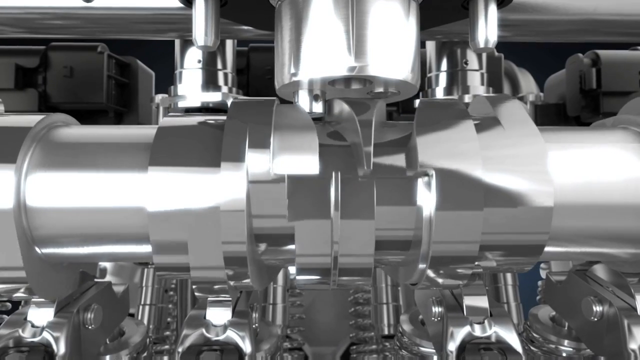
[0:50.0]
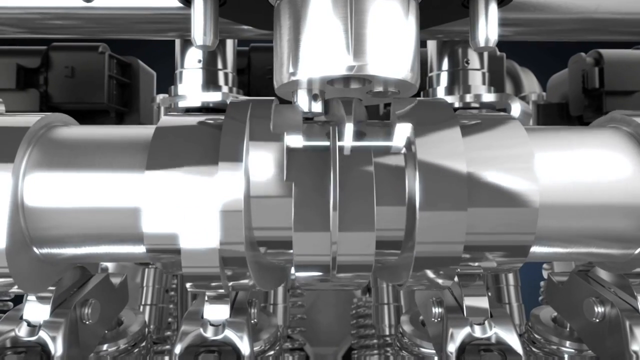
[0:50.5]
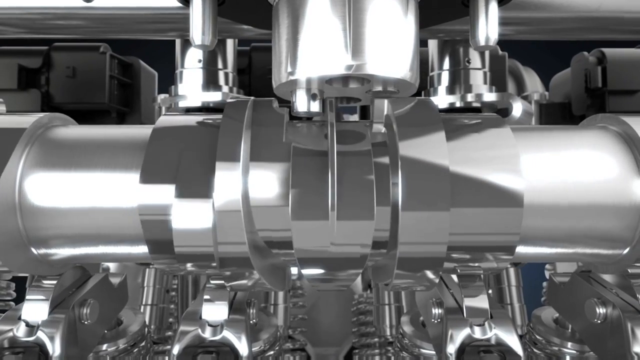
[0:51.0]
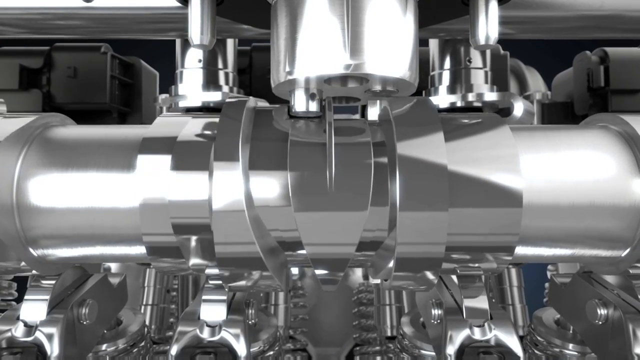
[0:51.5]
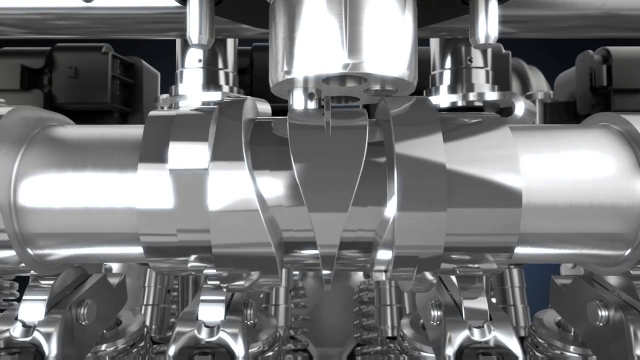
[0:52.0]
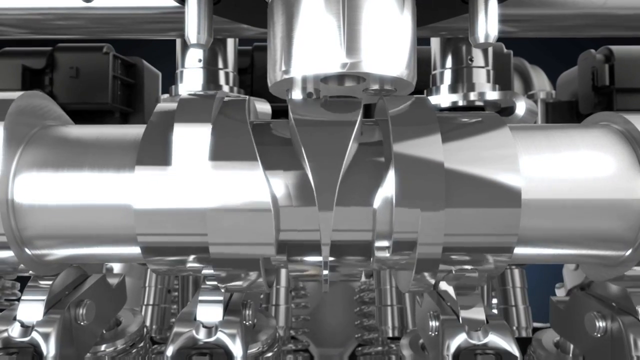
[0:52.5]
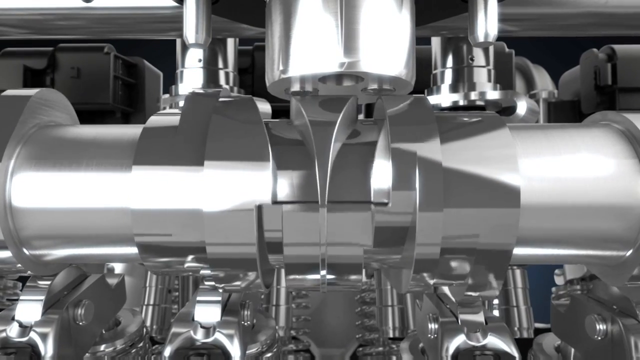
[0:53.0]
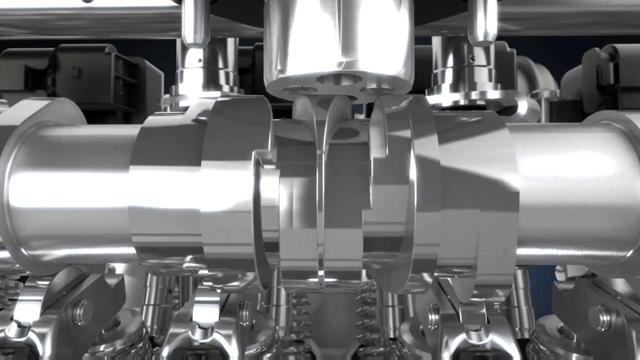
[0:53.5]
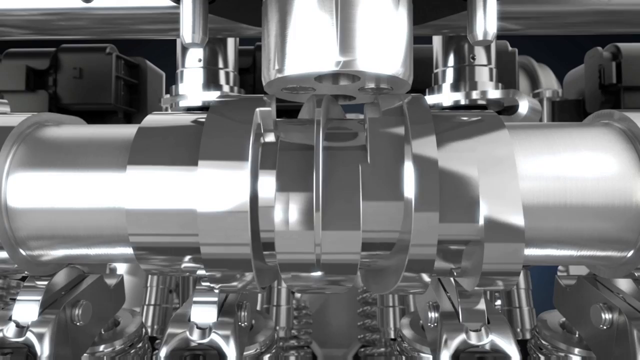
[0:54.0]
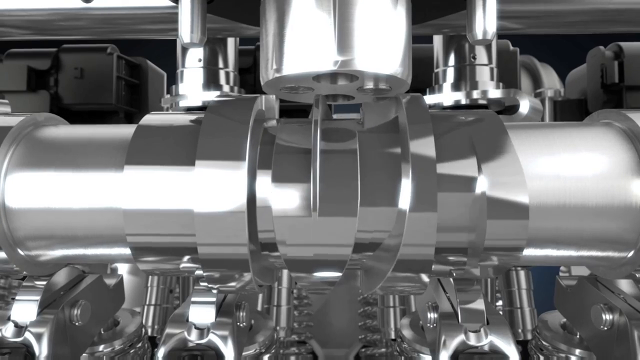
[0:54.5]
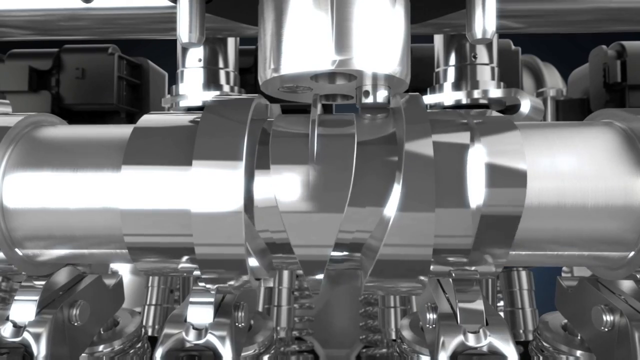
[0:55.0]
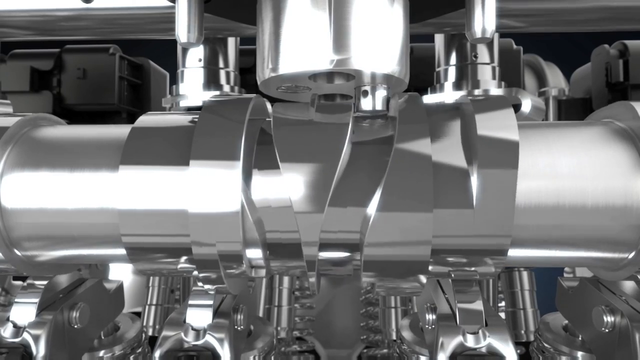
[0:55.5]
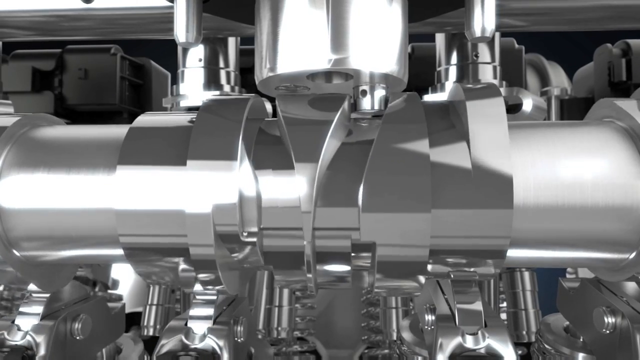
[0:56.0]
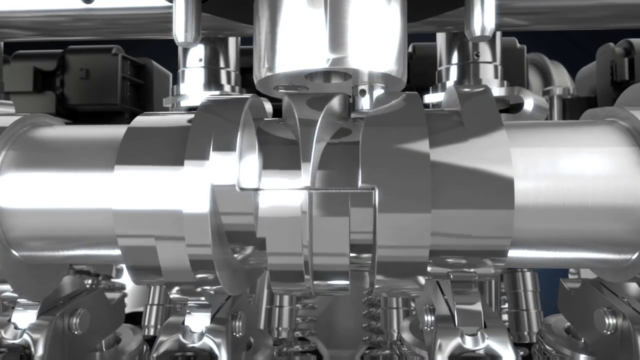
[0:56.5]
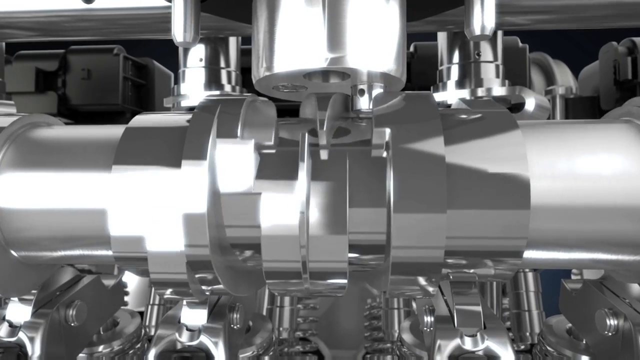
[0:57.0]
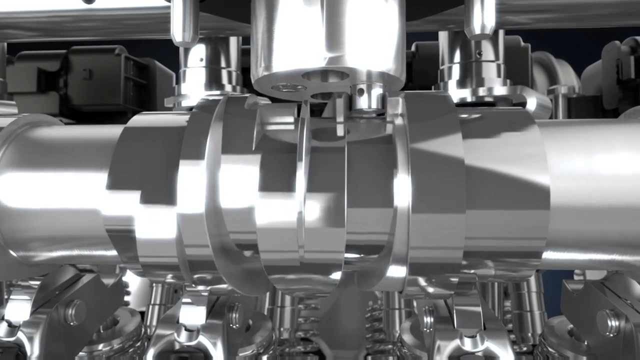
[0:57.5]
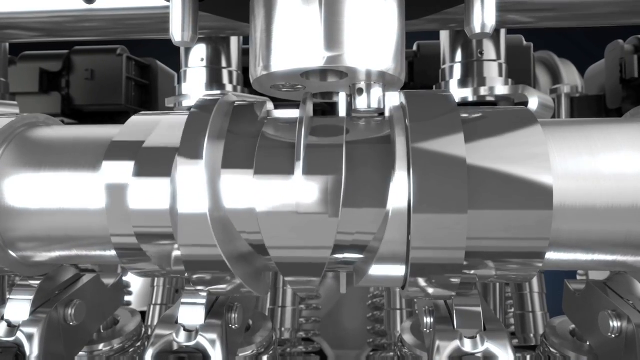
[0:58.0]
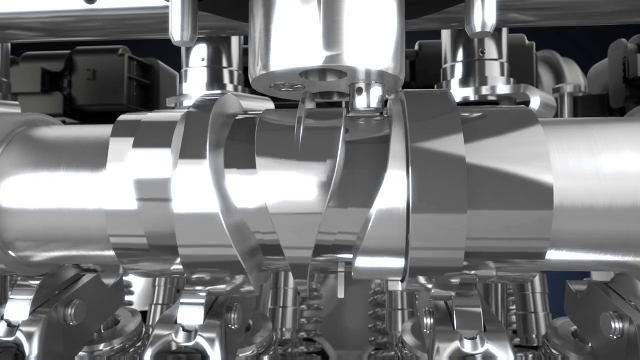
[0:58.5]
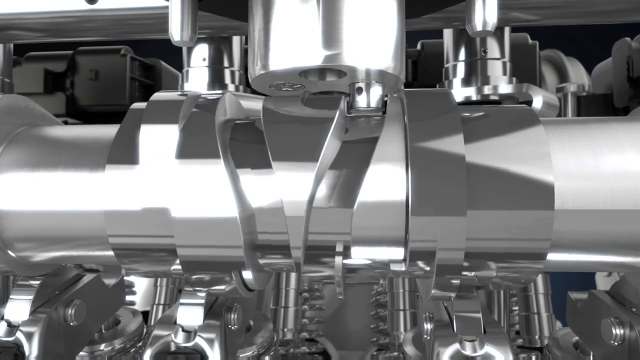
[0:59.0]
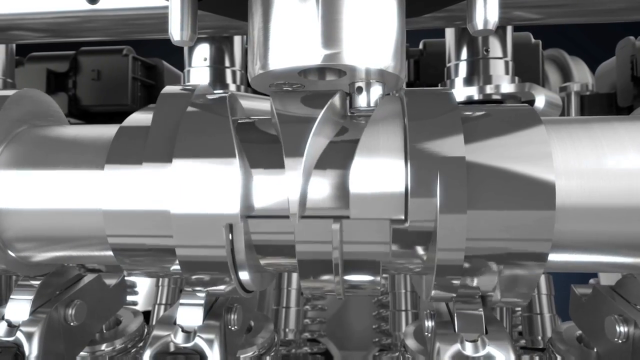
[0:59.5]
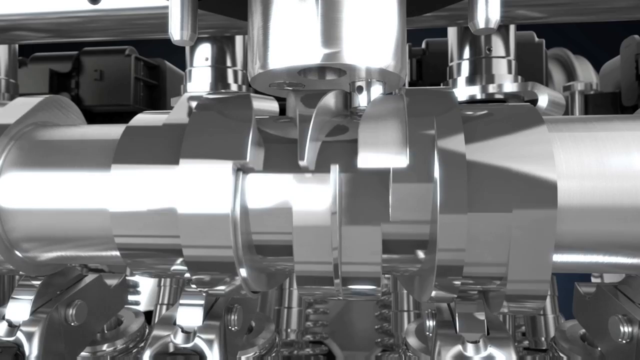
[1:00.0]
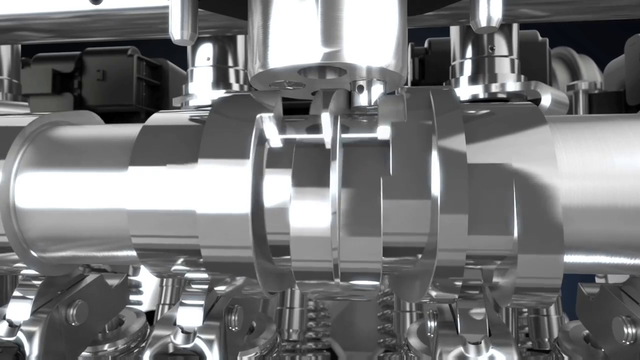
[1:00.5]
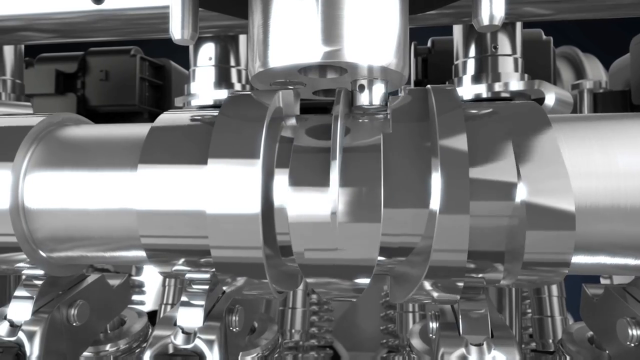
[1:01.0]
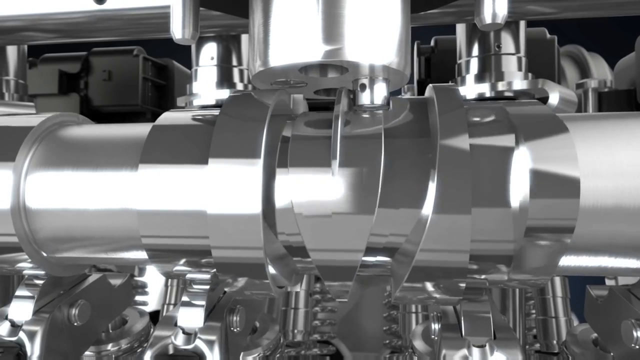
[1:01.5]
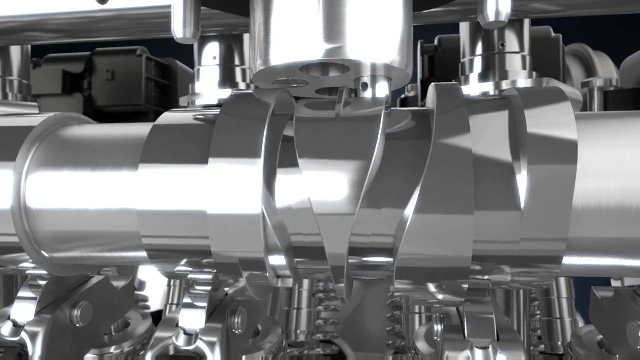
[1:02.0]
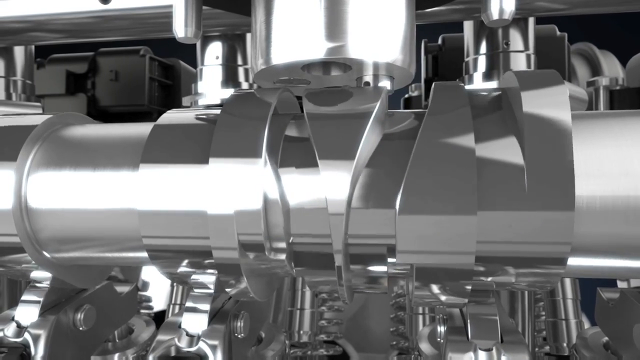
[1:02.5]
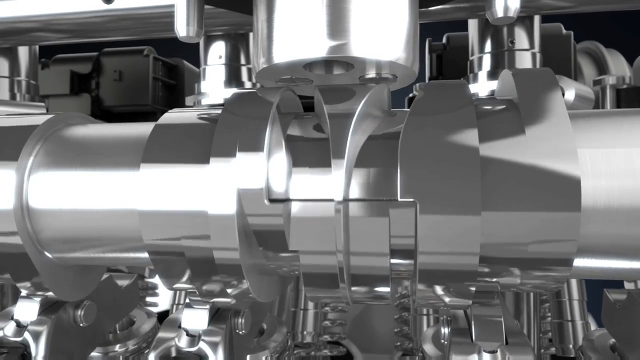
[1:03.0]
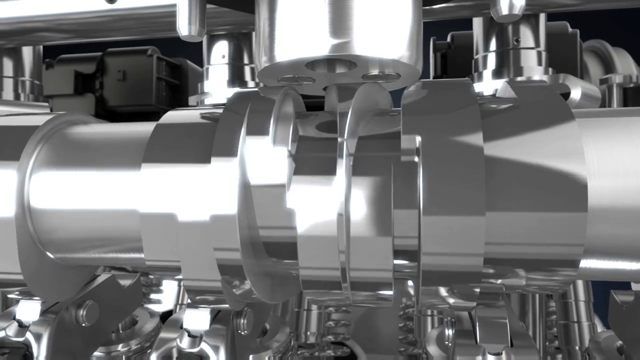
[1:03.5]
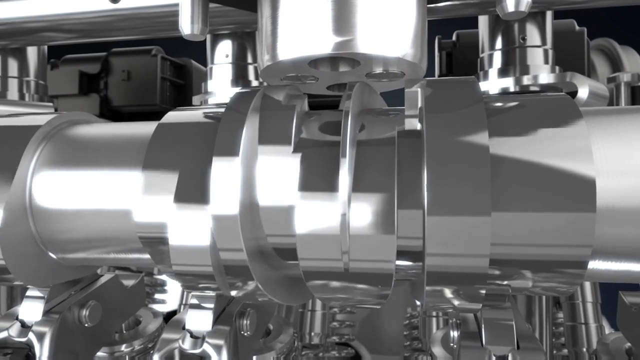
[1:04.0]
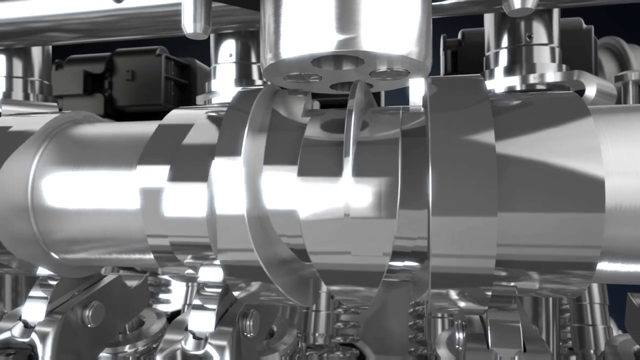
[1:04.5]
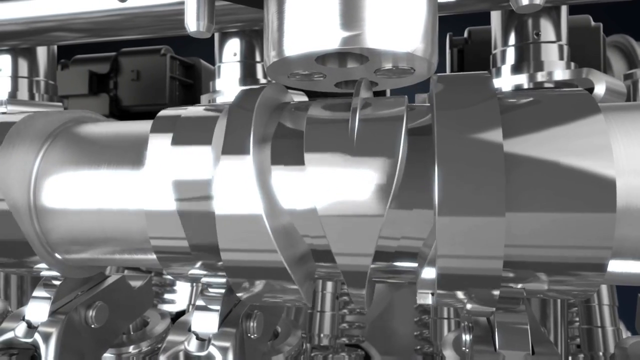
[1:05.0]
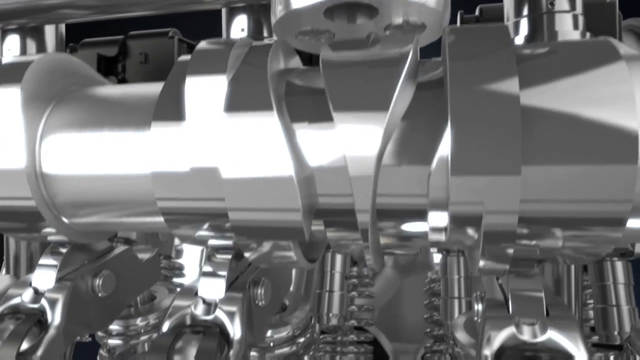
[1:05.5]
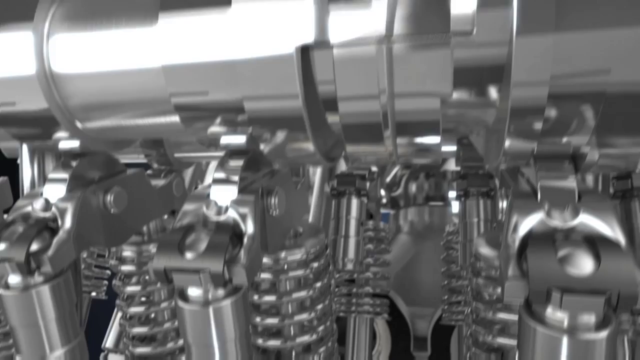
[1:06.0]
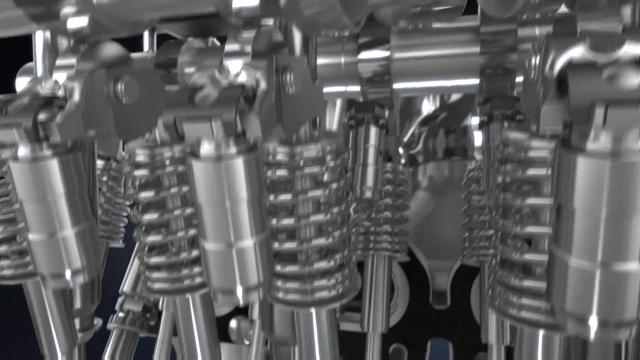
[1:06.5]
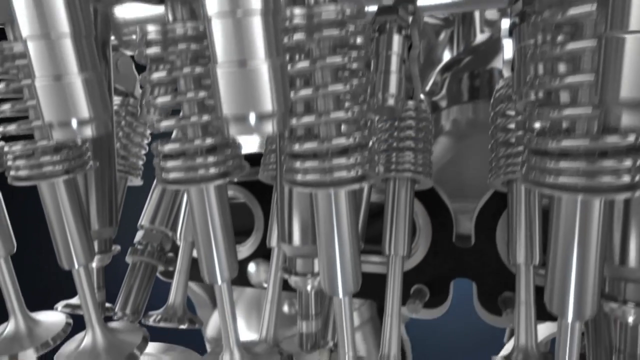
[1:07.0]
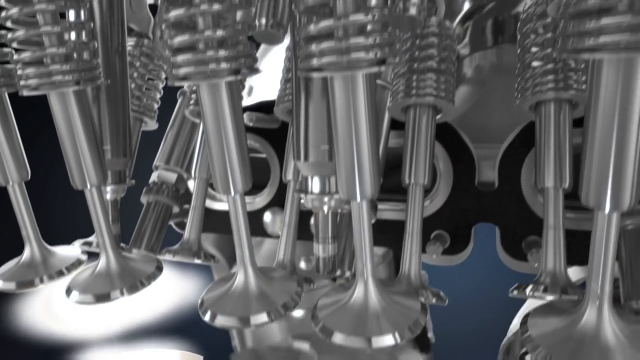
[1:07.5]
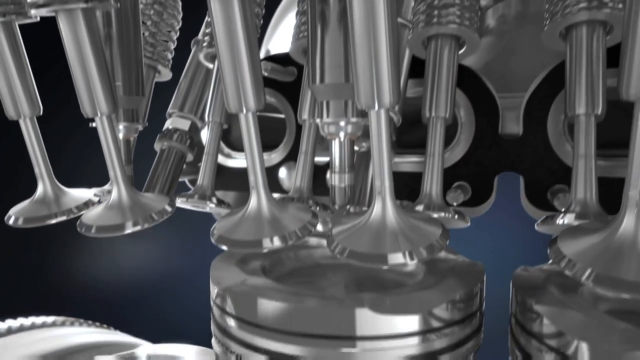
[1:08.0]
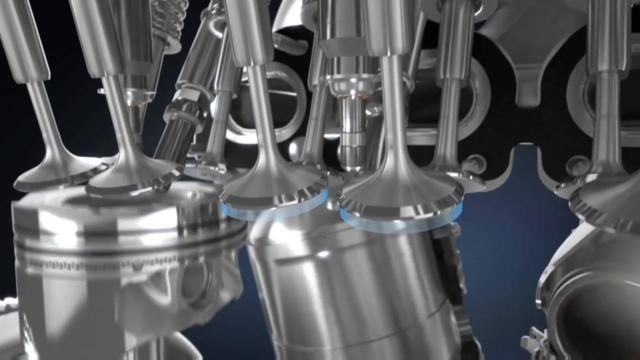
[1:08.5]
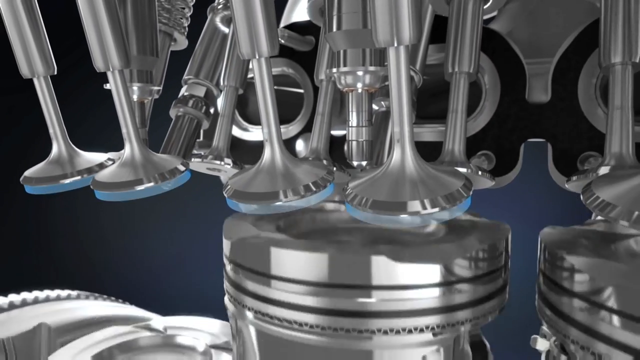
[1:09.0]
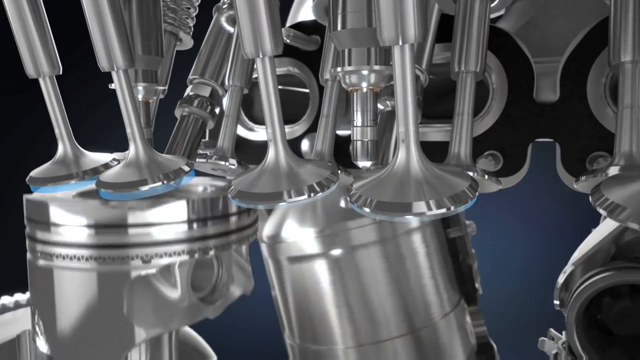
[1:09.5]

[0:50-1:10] A zoomed-in view shows the metal and chrome workings inside an engine, with different screws and bars spinning around each other. Some of the pieces have gotten somewhat bigger, showing portions going up and down in a kind of cylinder, and there is movement along the middle section, where something seems to spin around itself. The main color is gray or chrome silver, turning white where areas are lit more, especially in the very center of the video. There are skinnier components as well as thicker ones.